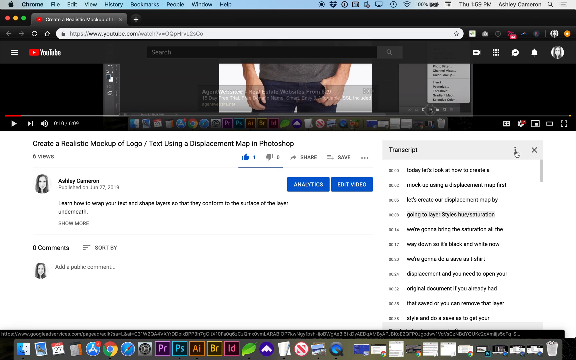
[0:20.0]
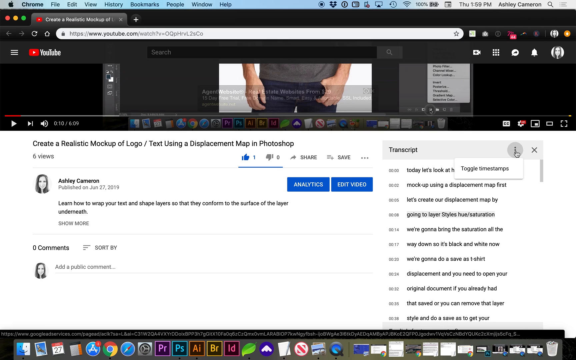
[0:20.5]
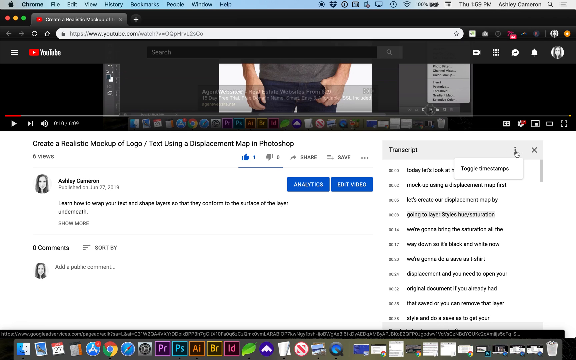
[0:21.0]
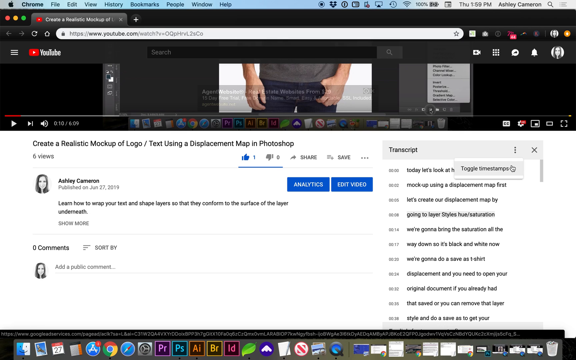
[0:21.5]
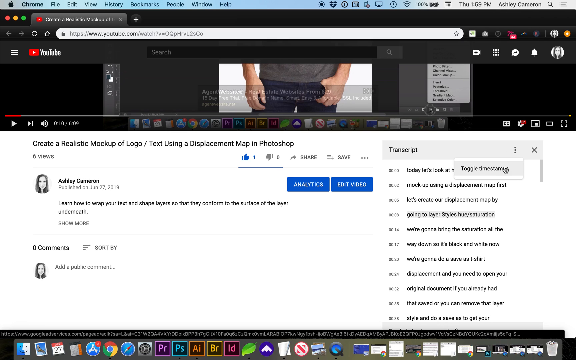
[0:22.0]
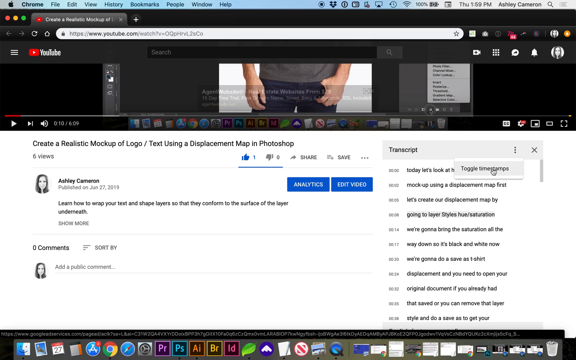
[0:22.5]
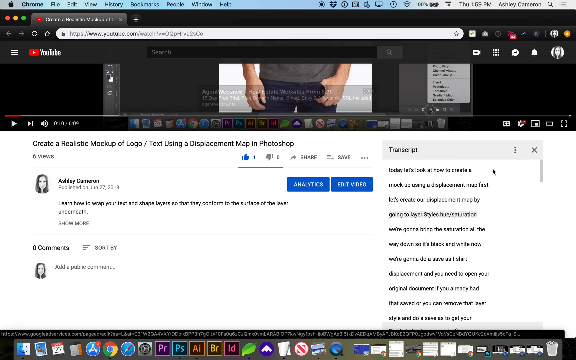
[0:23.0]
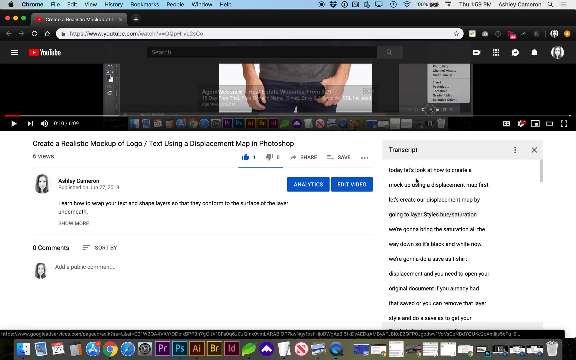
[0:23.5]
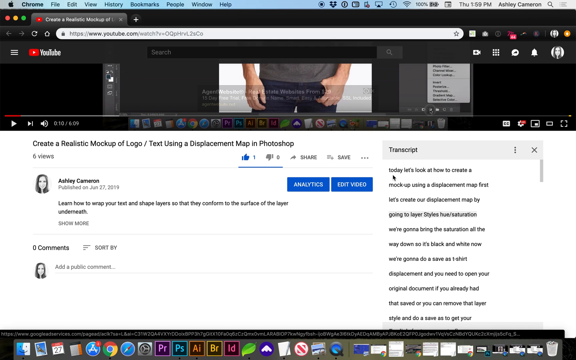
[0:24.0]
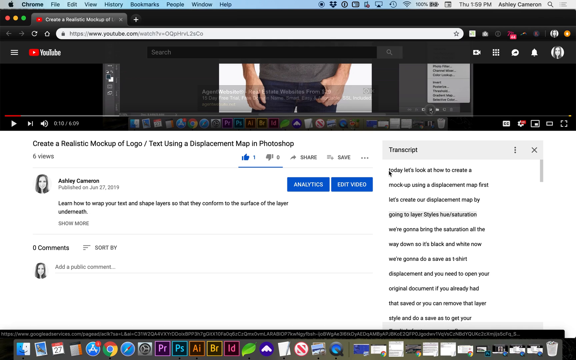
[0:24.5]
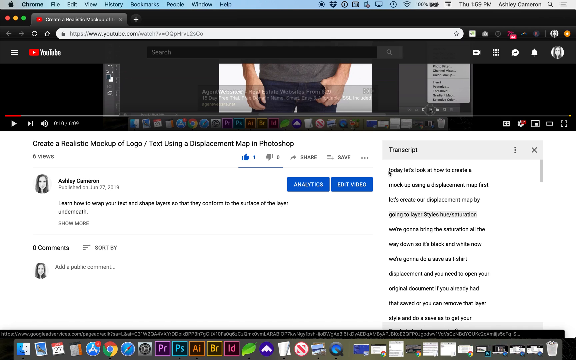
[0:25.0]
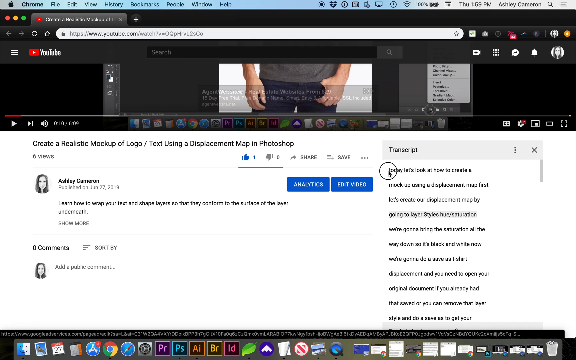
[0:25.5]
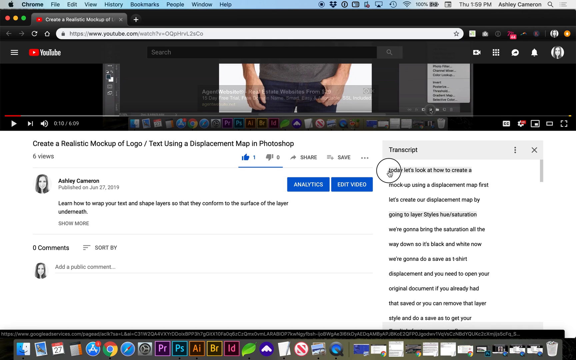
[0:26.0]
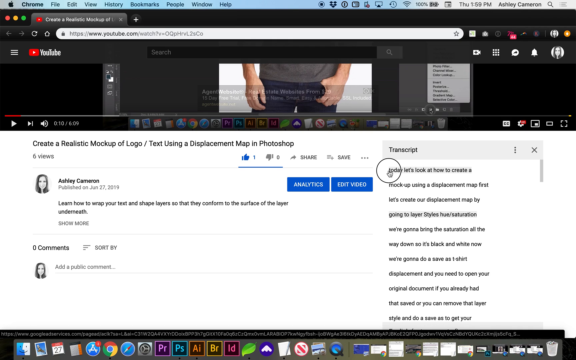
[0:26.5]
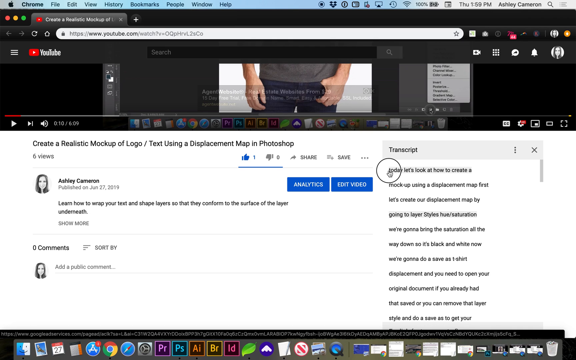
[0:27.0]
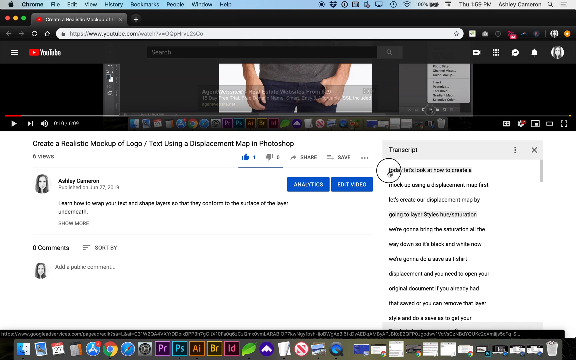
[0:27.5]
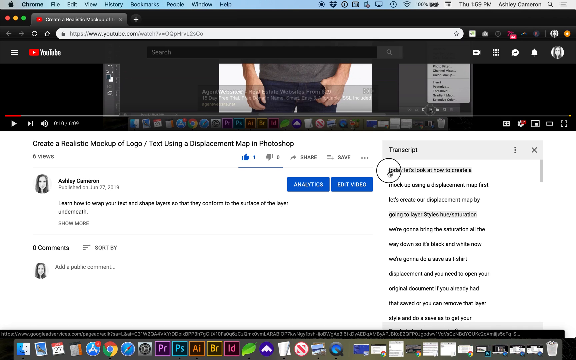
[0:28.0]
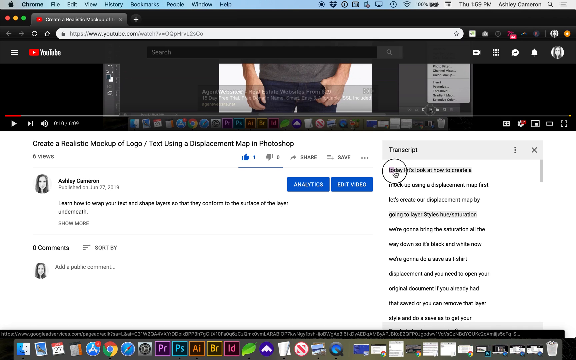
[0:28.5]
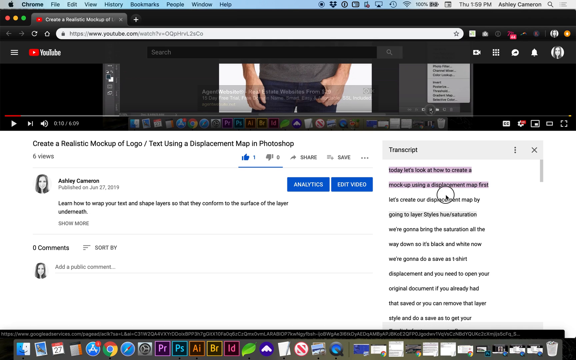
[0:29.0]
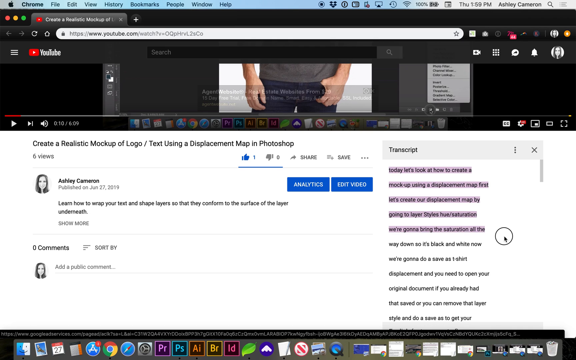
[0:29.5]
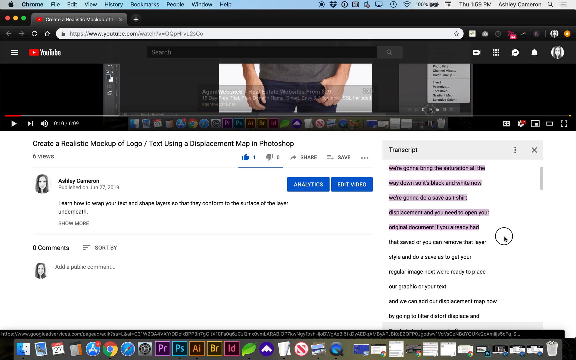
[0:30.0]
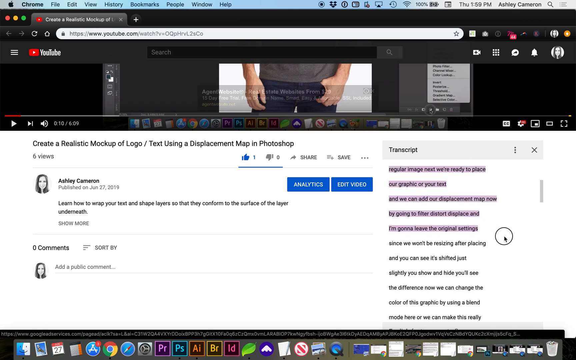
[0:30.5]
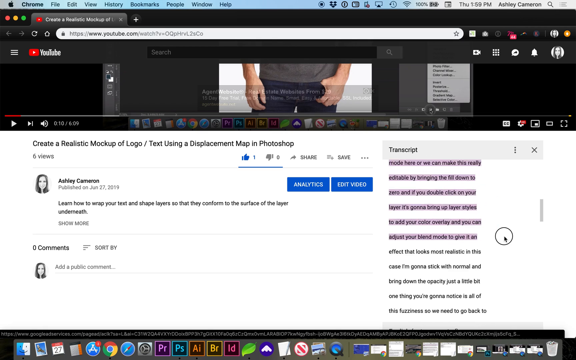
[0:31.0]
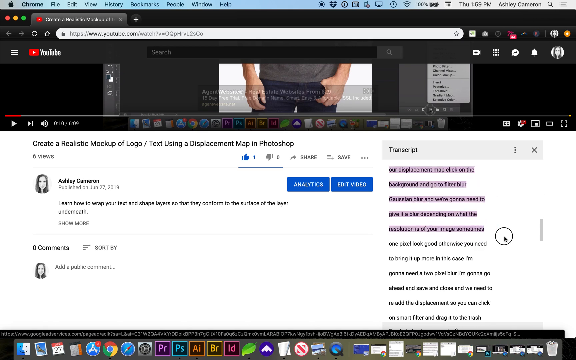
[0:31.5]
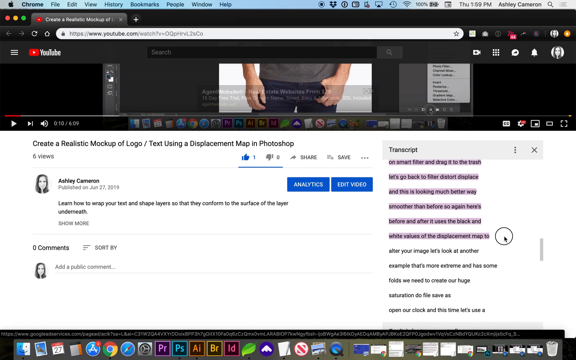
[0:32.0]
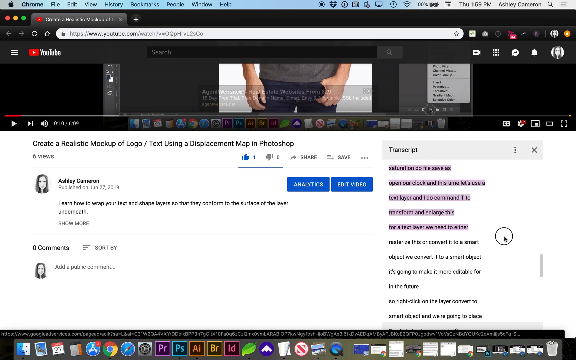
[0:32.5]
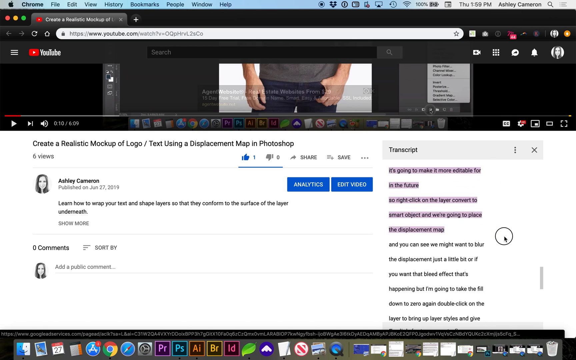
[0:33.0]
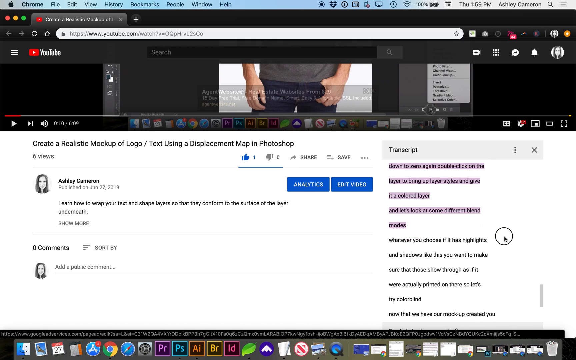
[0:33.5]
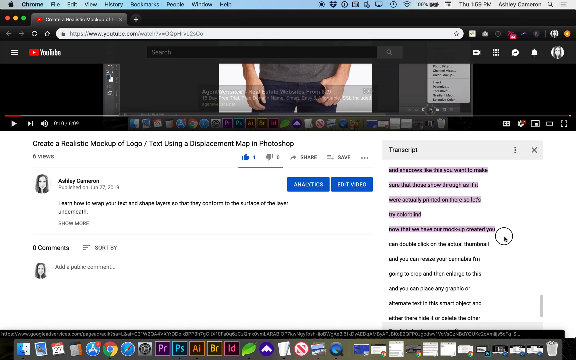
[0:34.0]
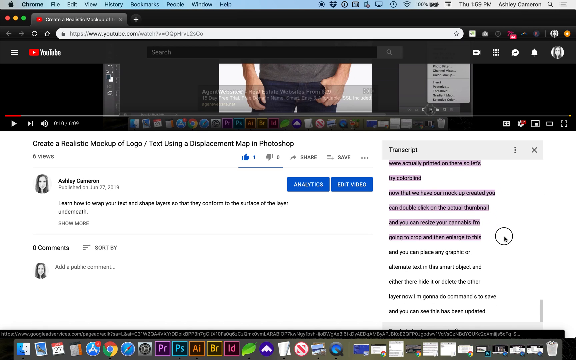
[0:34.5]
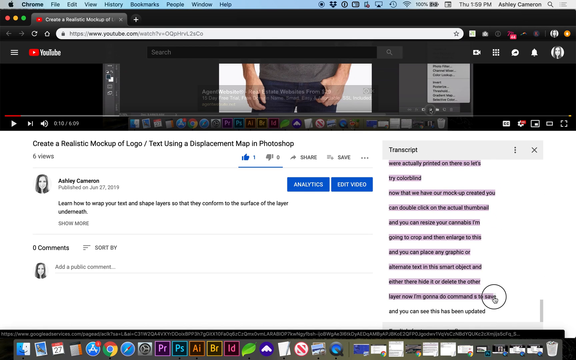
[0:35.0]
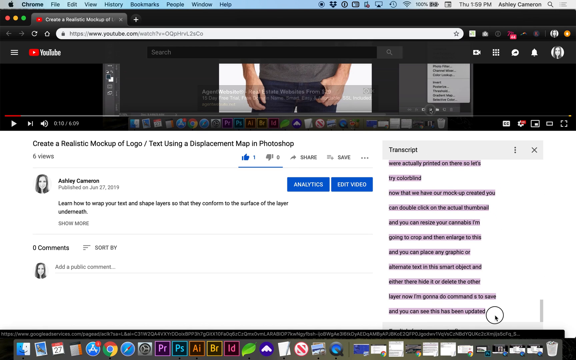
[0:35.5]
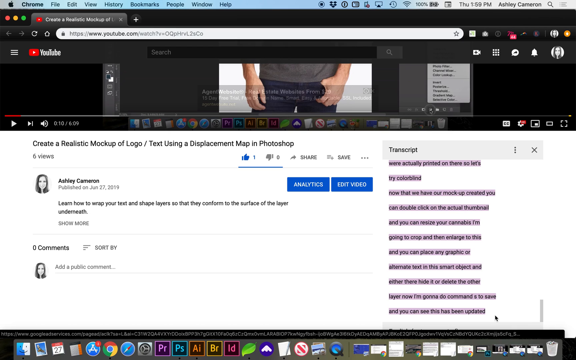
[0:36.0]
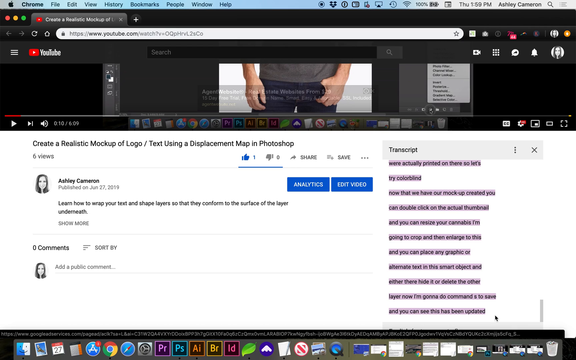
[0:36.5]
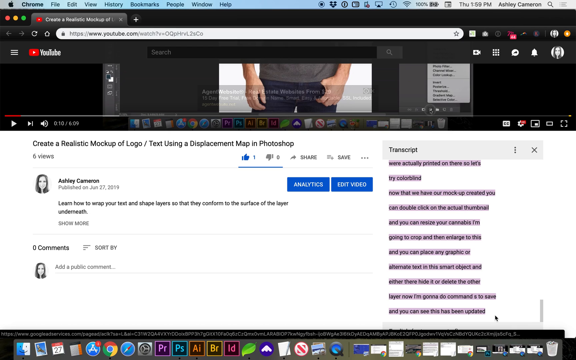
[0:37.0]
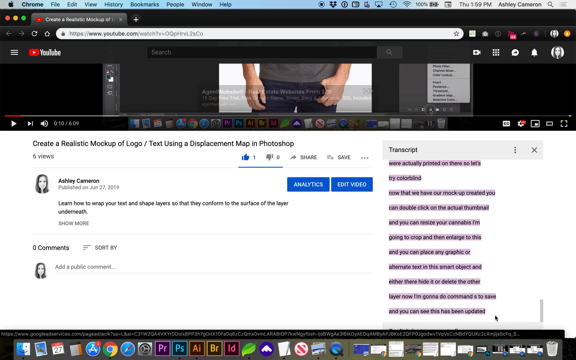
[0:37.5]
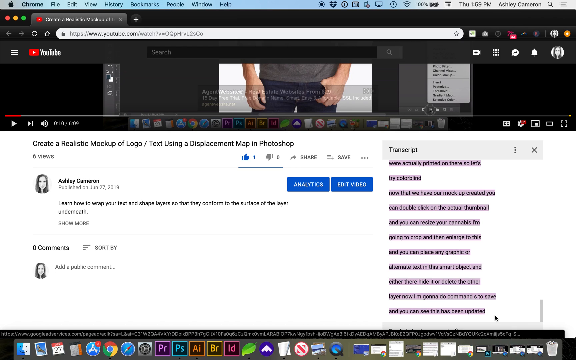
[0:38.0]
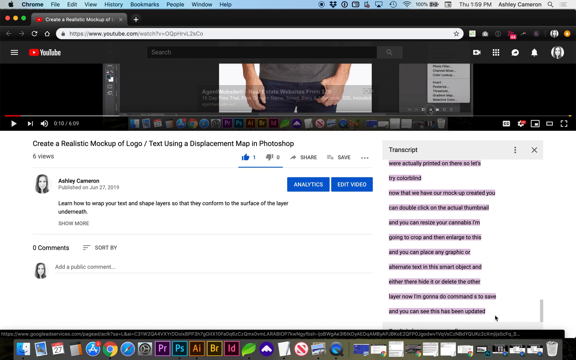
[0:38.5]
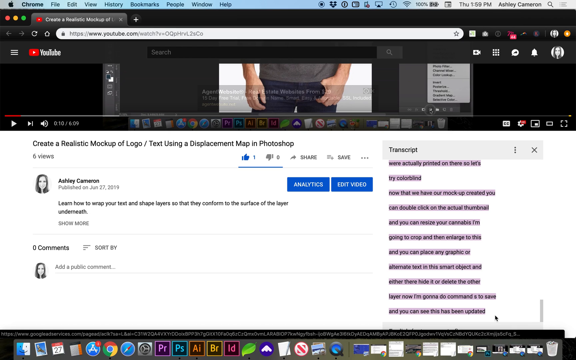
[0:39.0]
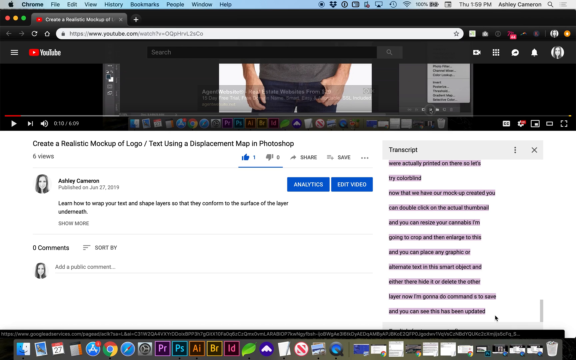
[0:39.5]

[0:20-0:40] The three dots next to the word "transcript" are clicked, showing the option "Toggle Timestamps." Clicking this option makes the timestamps appear. The mouse moves around and selects all of the text from beginning to end, demonstrating a YouTube functionality. With the screen stopped, Ashley Cameron's profile is visible, along with the video's publication date, June 27, 2019.